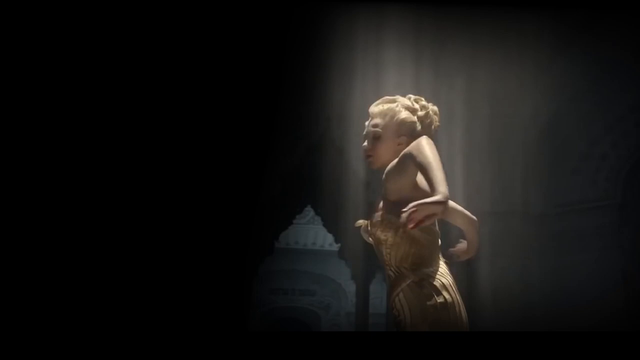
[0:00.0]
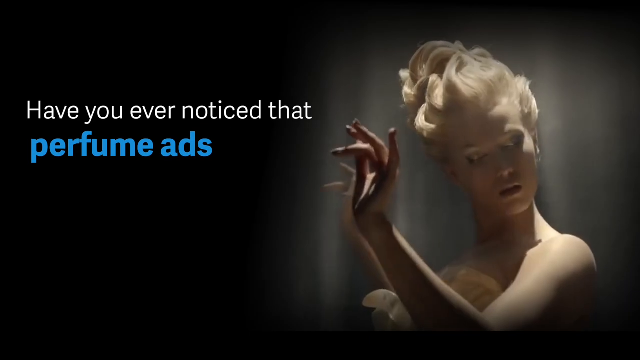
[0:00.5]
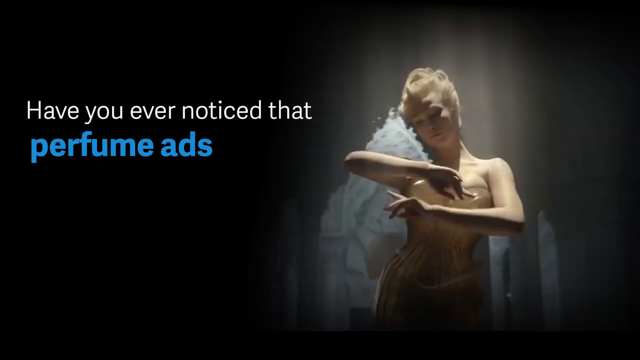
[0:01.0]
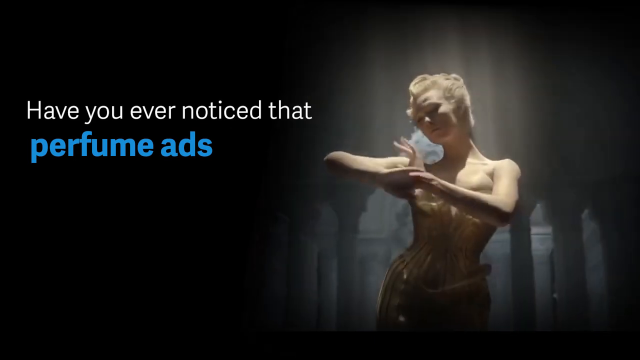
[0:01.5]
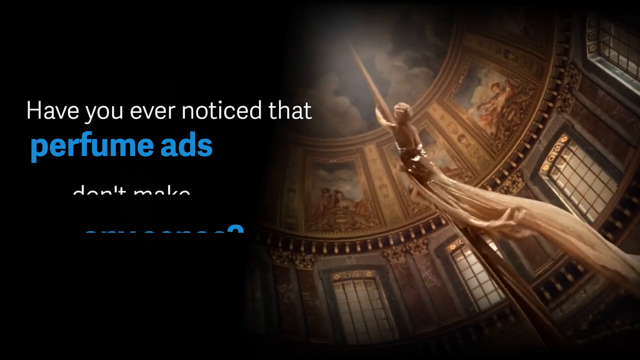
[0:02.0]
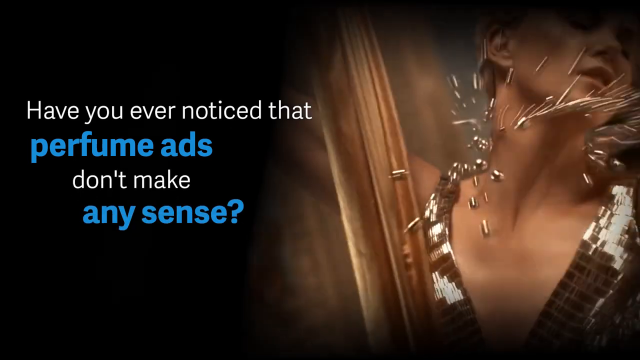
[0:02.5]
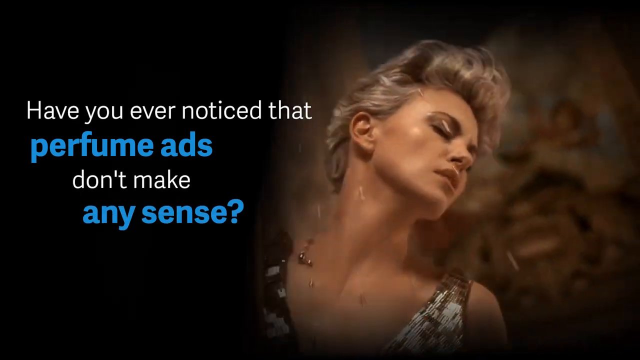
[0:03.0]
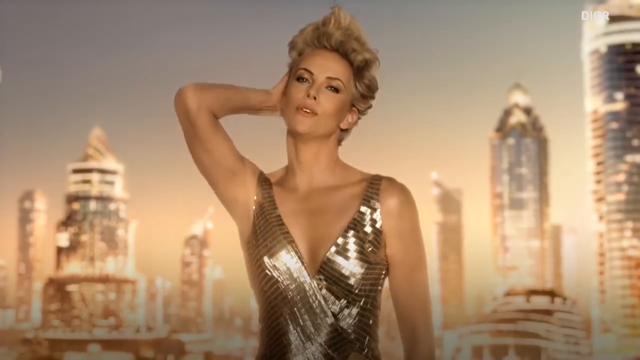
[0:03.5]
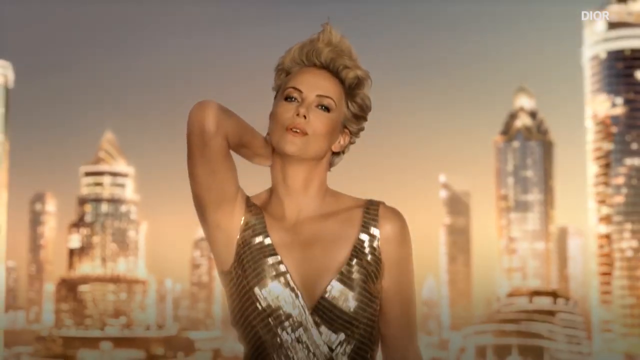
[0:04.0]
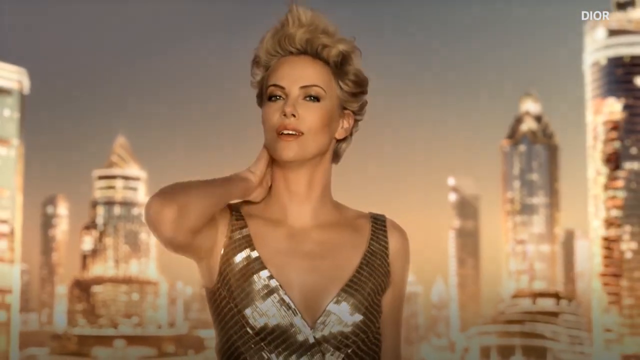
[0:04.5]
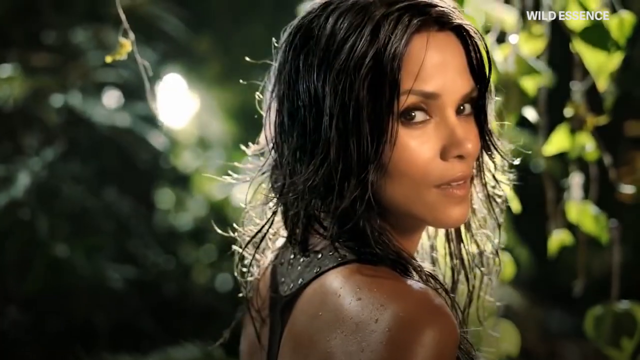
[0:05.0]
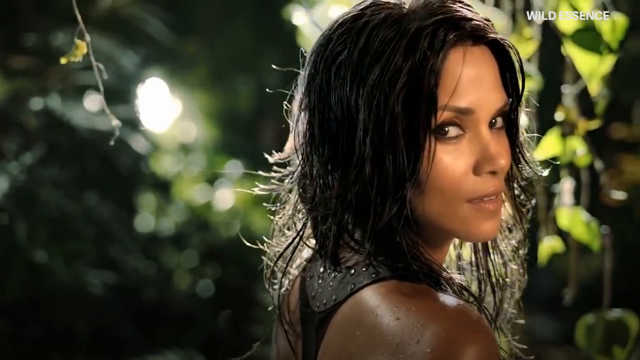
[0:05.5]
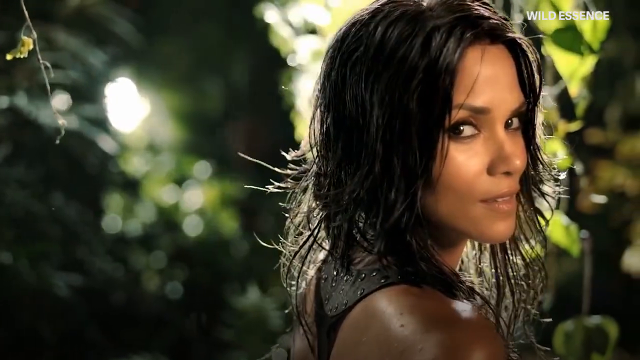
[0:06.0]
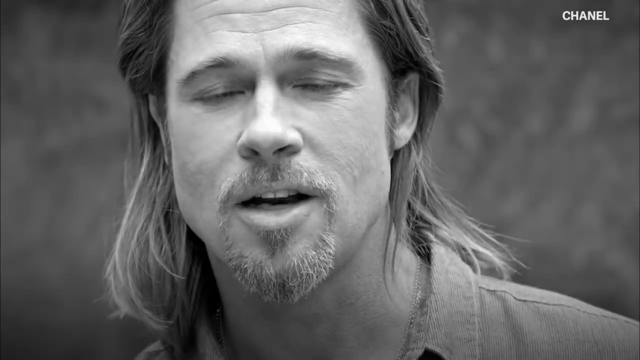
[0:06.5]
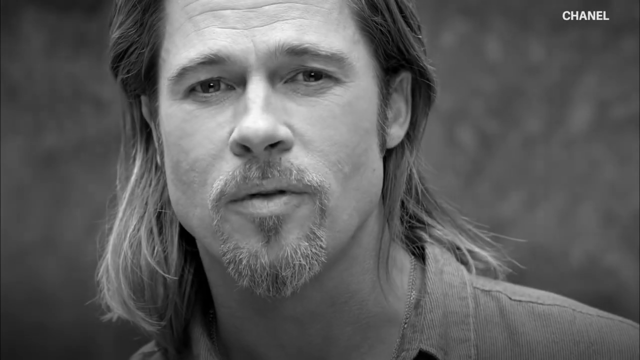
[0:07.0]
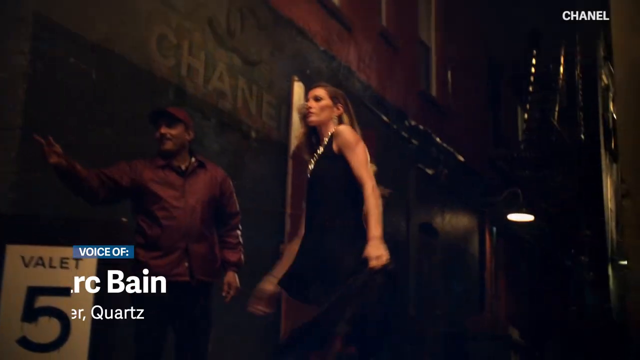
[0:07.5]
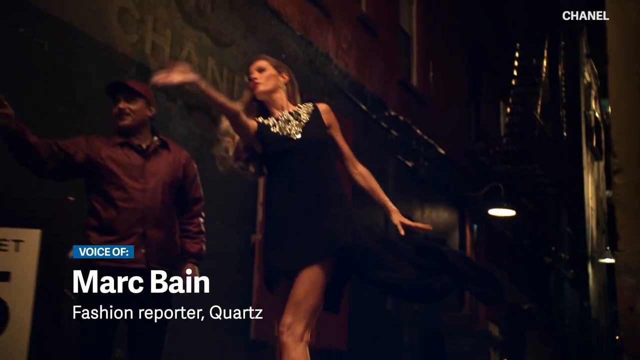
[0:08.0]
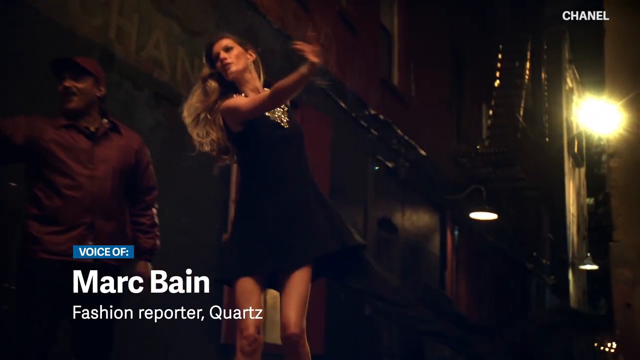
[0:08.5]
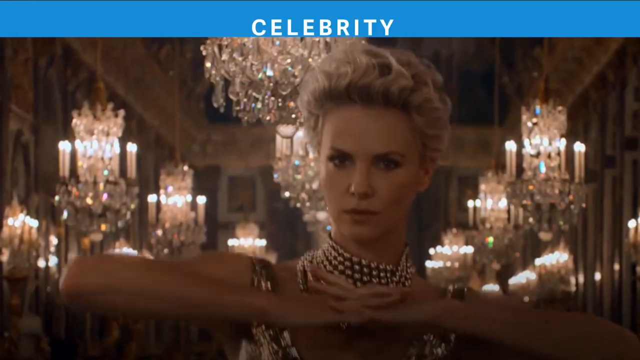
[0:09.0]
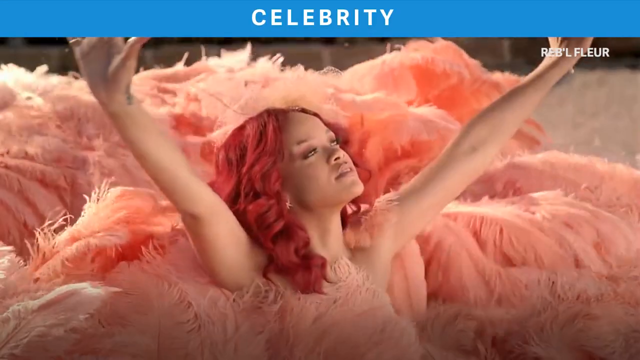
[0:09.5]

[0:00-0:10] The background is dark, and on the right side a woman moves her arms in a very awkward way, apparently dancing. On the left side, white text reads "Have you ever noticed that"; the next line, "perfume ads," is in blue, followed by "don't make" in white and "any sense?" in blue. Different people, such as actresses, walk surrounded by flowers. The word "Chanel" appears, and a man who appears to be Brad Pitt is talking. Text then reads "top celebrity," along with some sort of perfume ads.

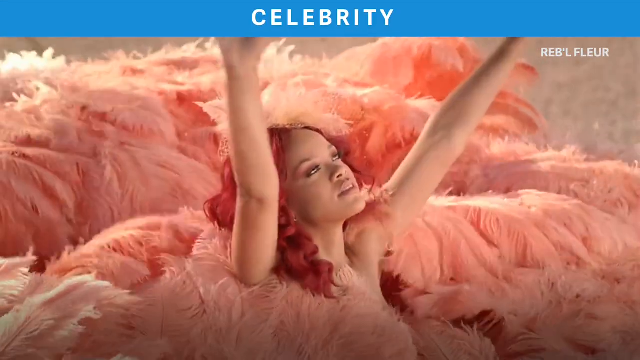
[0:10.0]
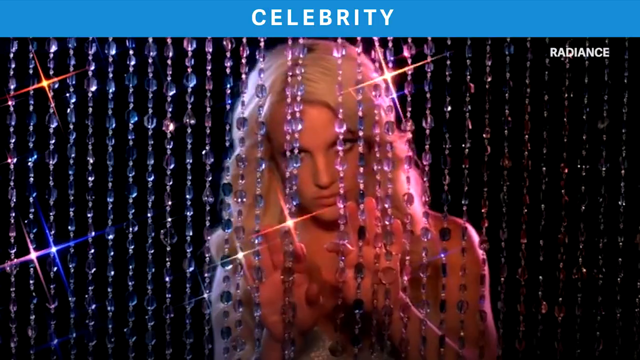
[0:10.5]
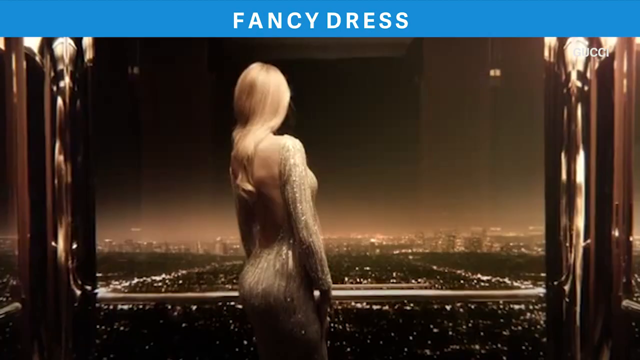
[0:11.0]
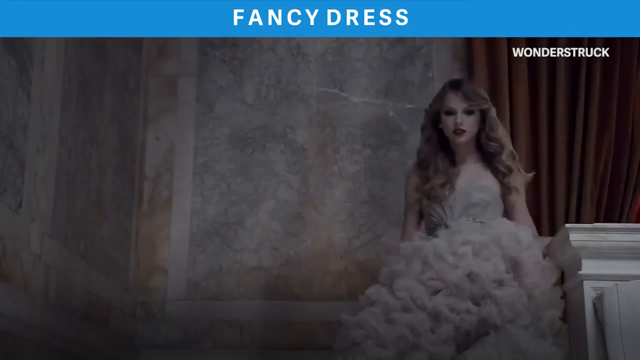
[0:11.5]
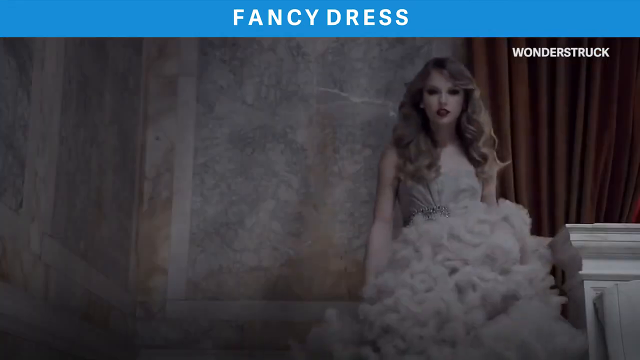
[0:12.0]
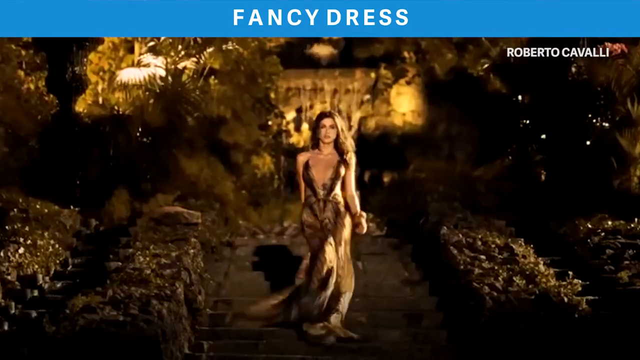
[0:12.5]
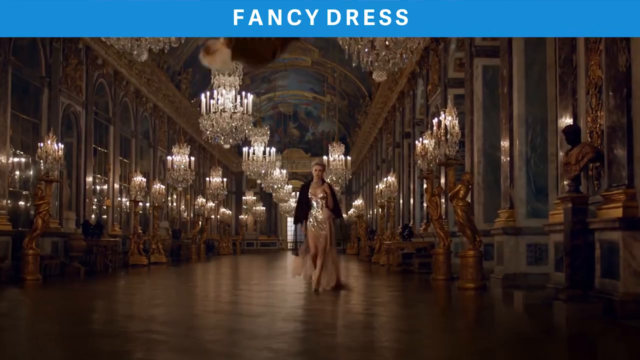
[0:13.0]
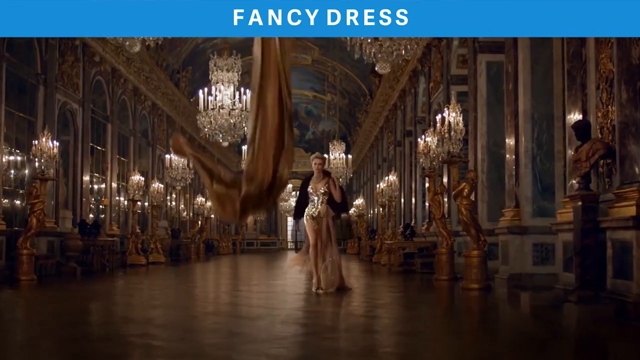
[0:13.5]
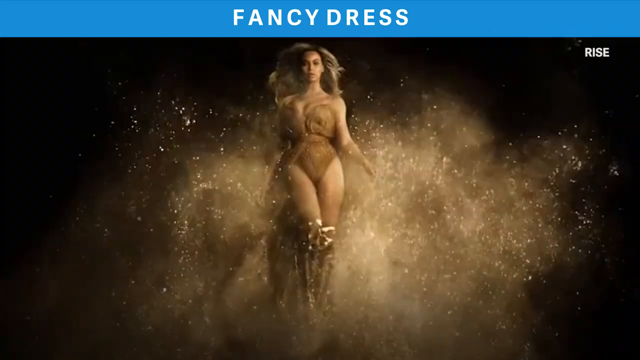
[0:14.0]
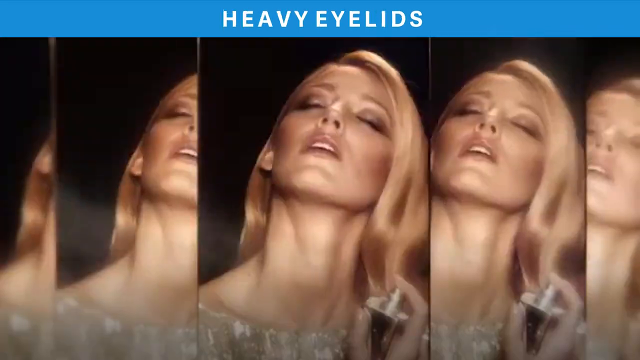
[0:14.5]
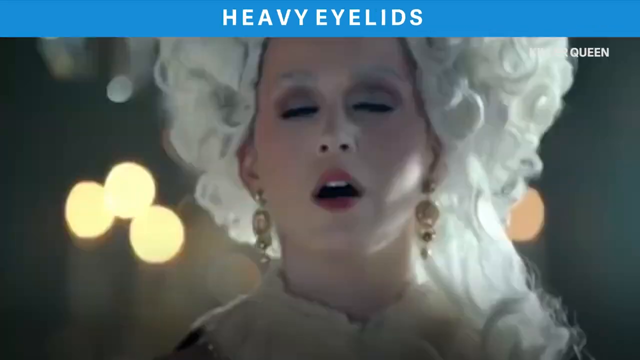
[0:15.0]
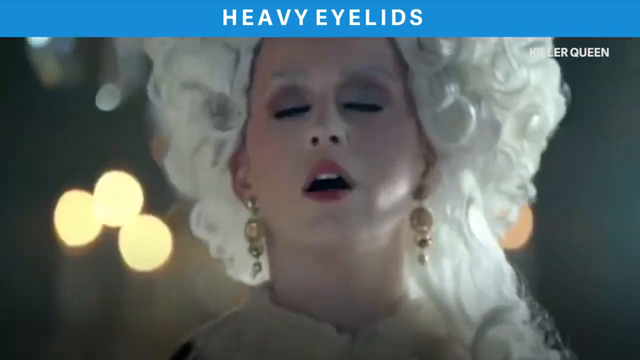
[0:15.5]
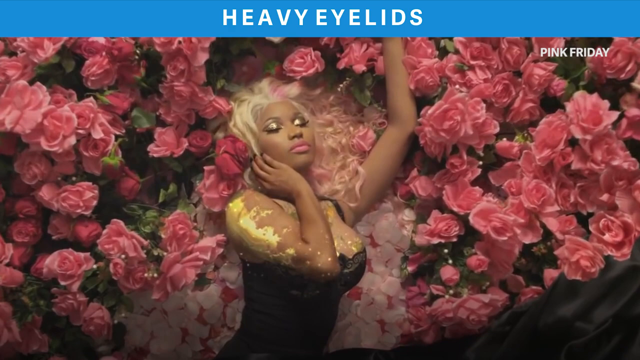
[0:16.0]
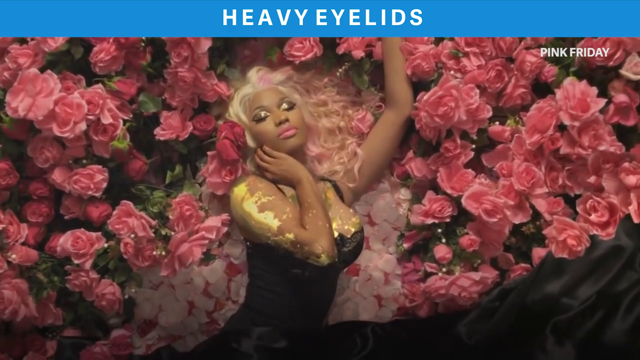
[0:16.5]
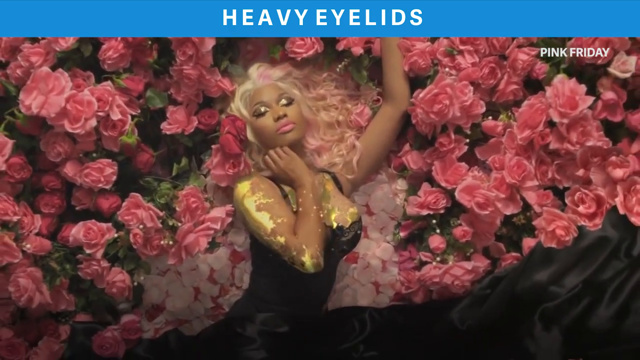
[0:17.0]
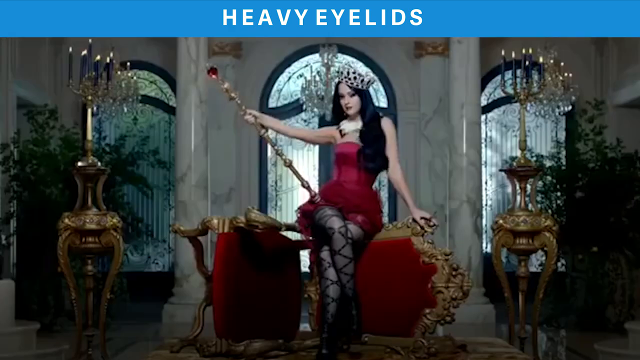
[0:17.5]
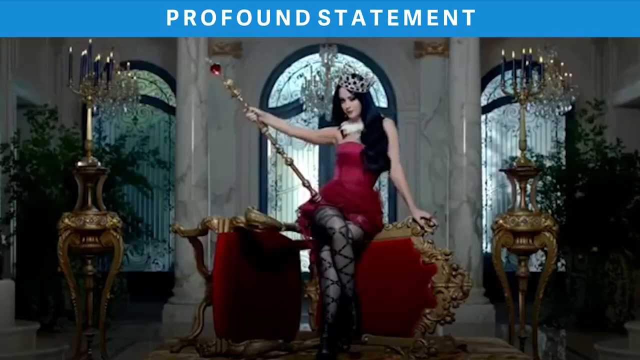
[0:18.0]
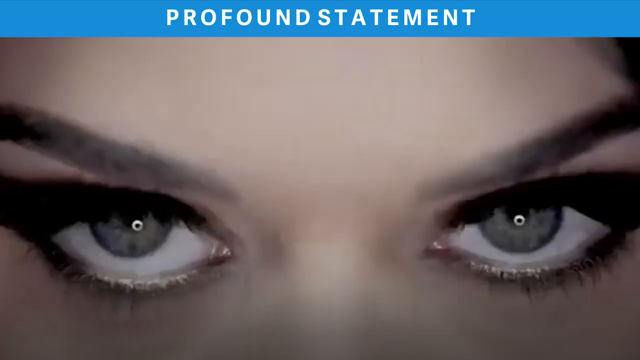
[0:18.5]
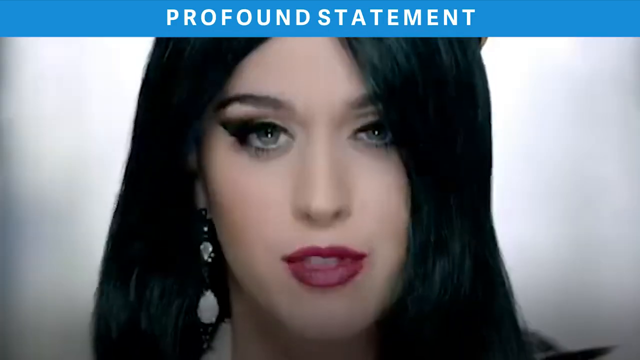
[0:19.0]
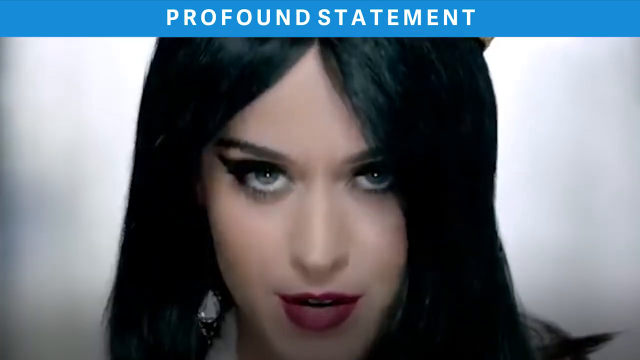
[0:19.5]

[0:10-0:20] A red-haired woman is surrounded by others, her arms stretched out in the air as she looks up at the sky. Britney Spears opens what look like bejeweled curtains and walks out. Other performers follow, such as Taylor Swift, then an actress running, and Beyonce.